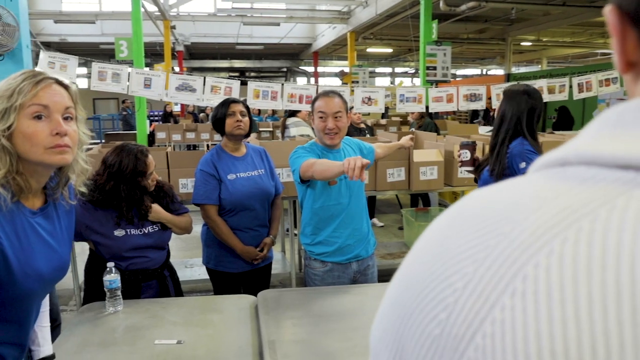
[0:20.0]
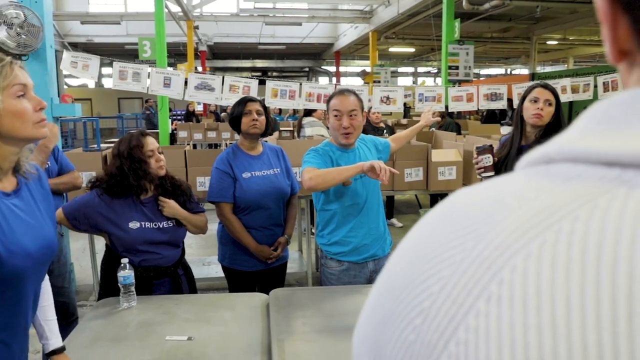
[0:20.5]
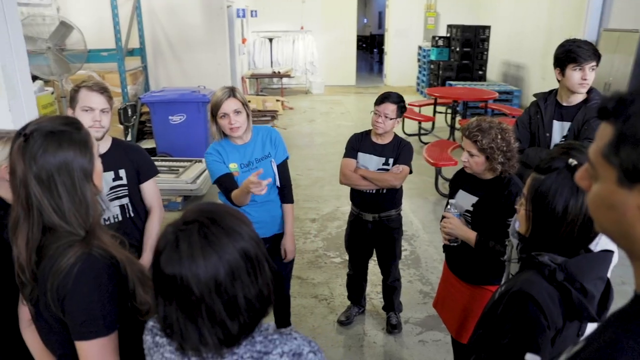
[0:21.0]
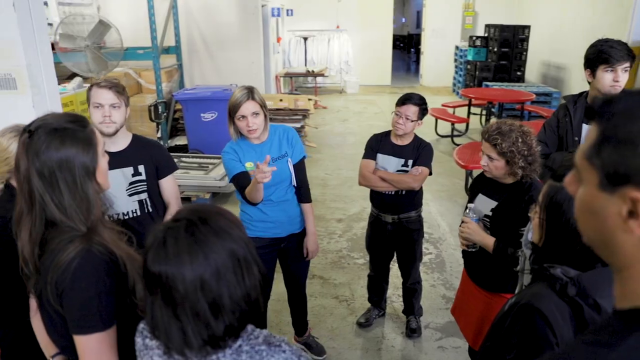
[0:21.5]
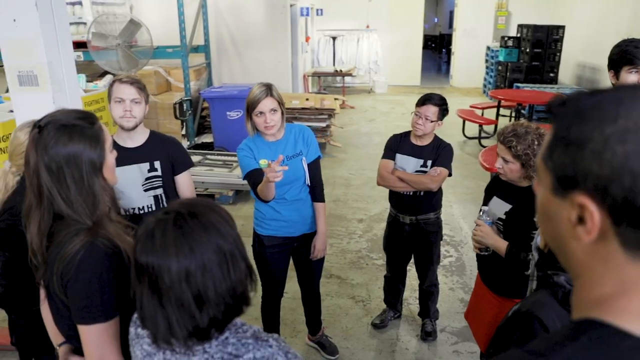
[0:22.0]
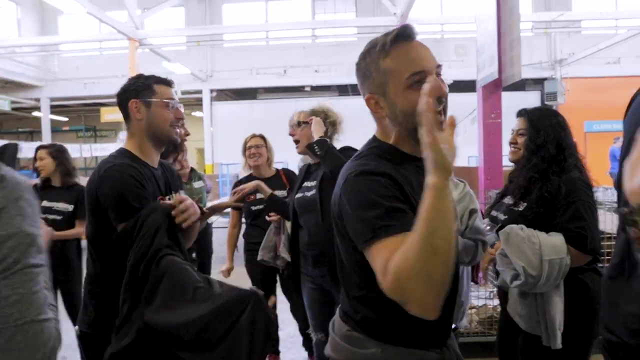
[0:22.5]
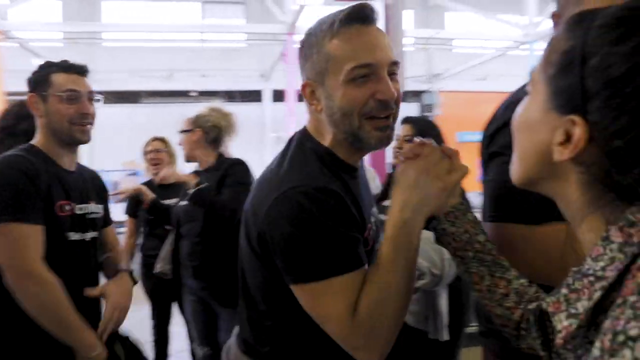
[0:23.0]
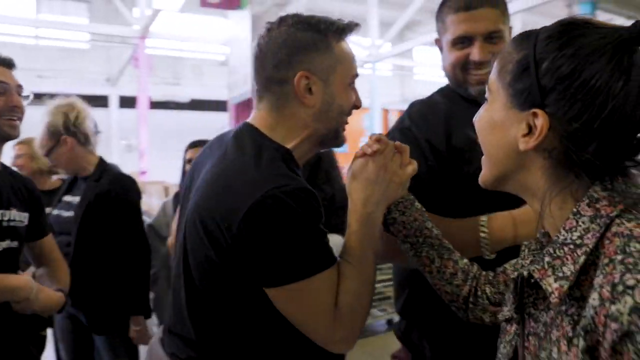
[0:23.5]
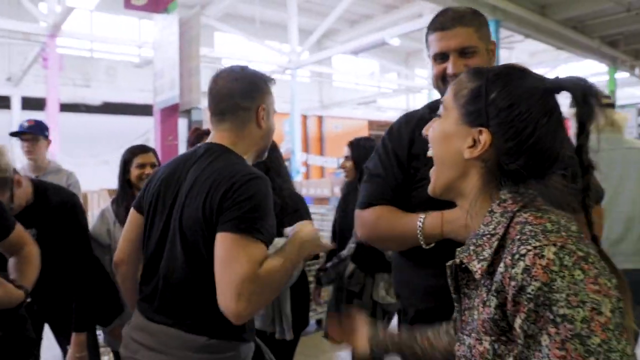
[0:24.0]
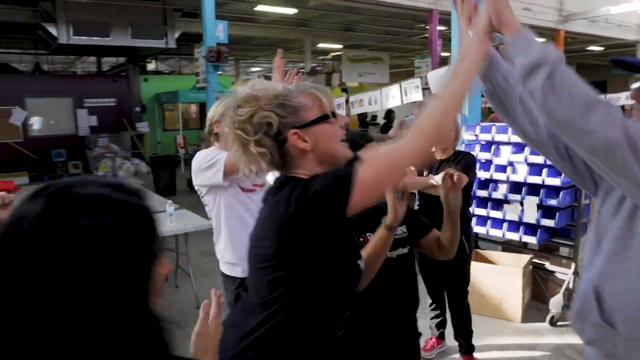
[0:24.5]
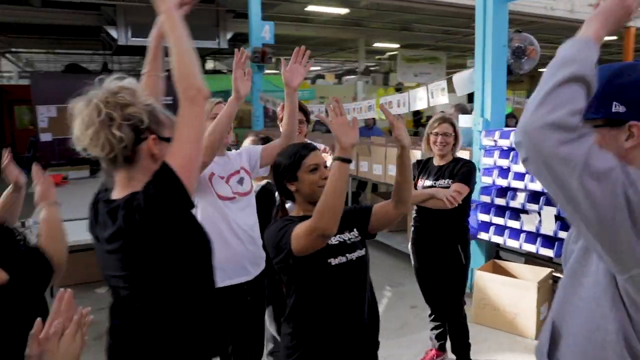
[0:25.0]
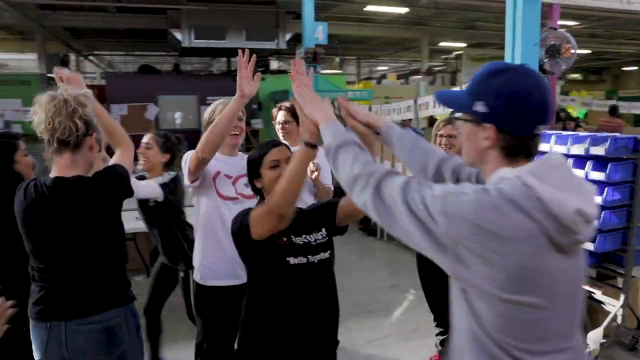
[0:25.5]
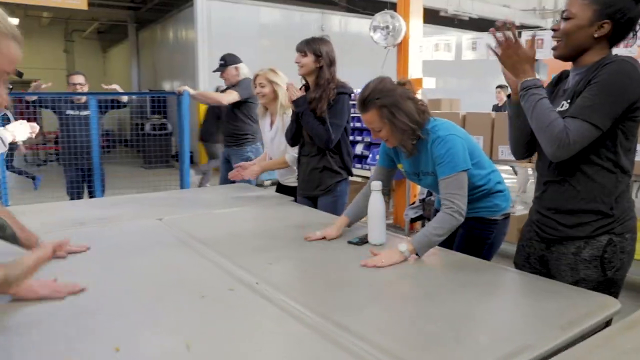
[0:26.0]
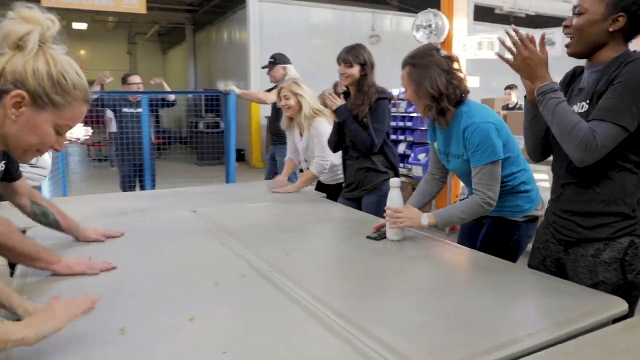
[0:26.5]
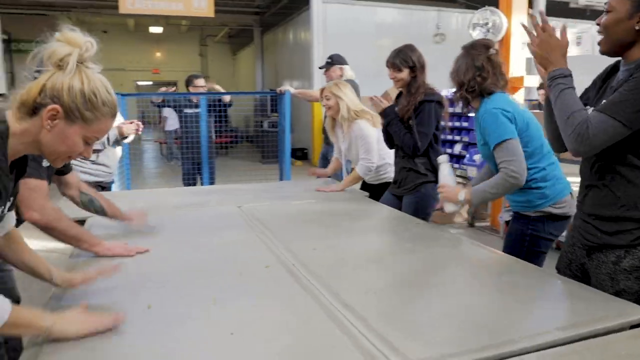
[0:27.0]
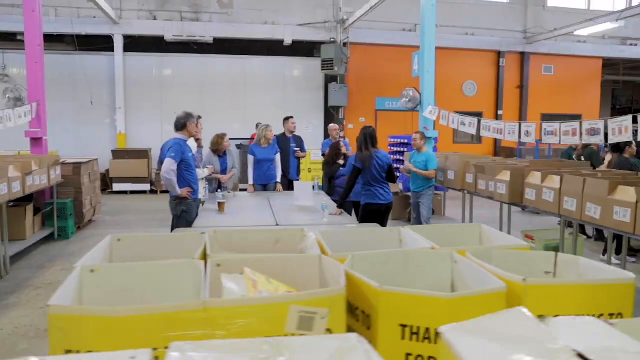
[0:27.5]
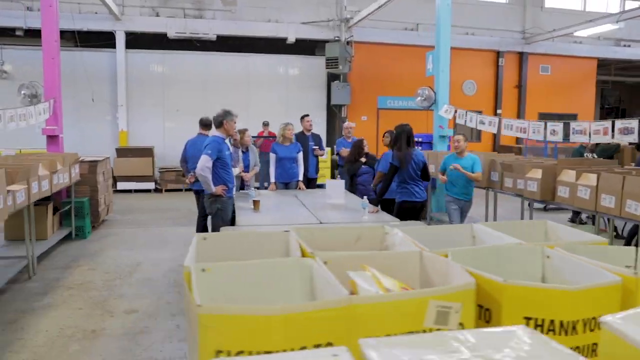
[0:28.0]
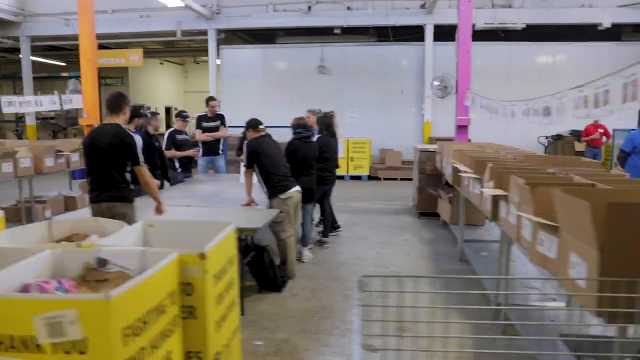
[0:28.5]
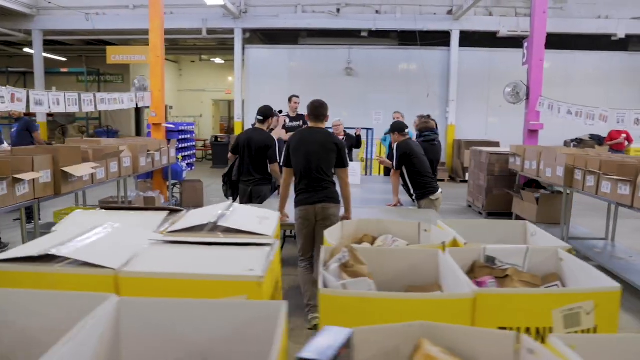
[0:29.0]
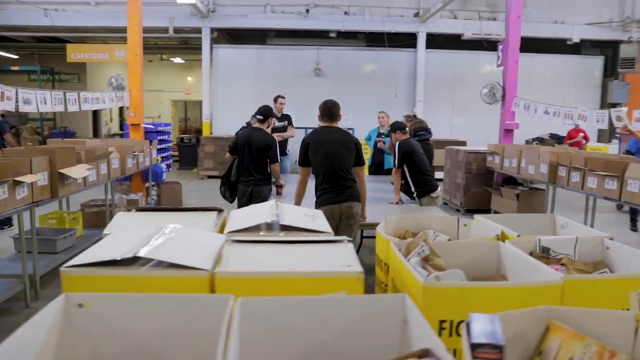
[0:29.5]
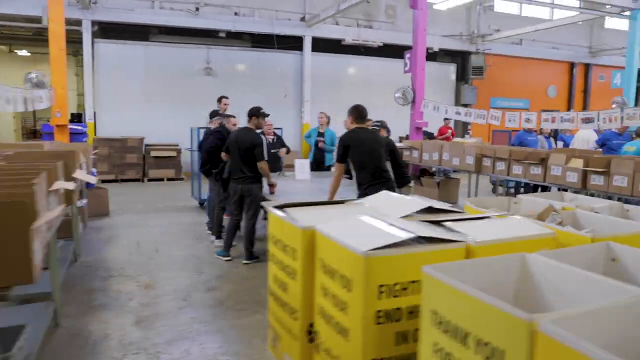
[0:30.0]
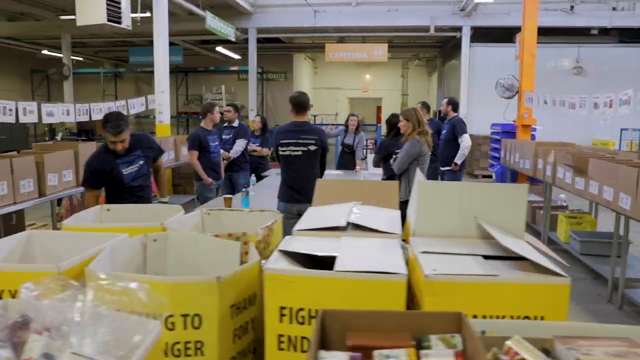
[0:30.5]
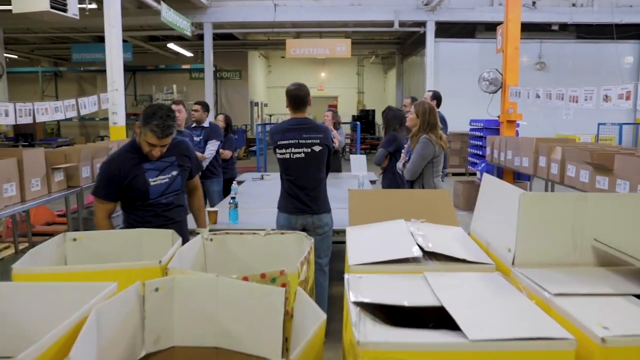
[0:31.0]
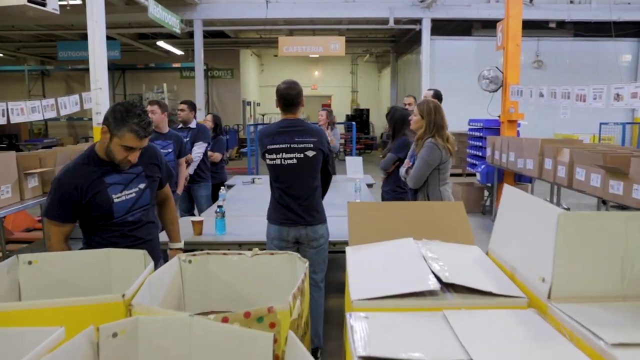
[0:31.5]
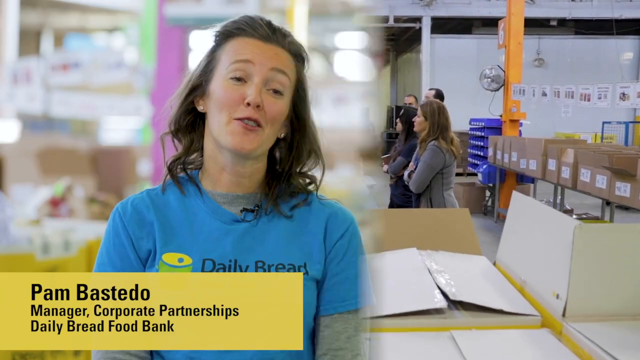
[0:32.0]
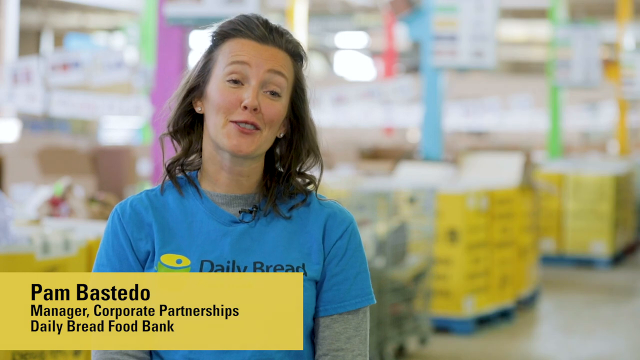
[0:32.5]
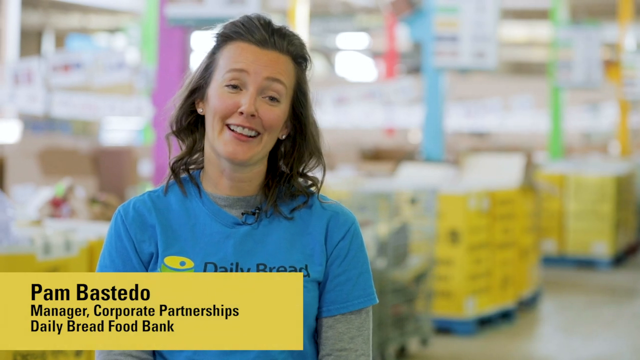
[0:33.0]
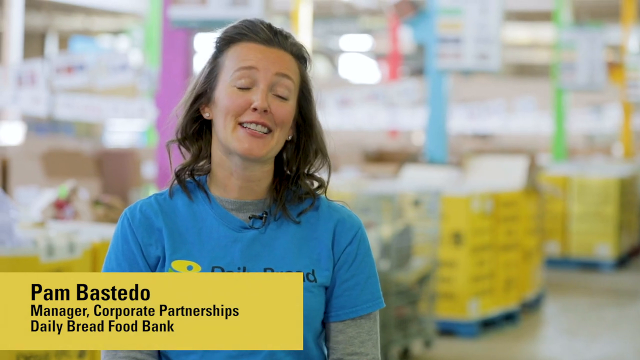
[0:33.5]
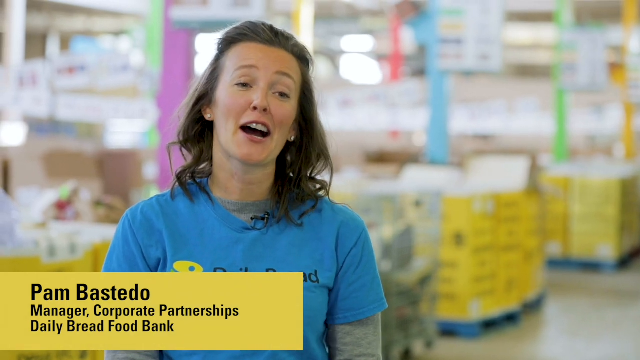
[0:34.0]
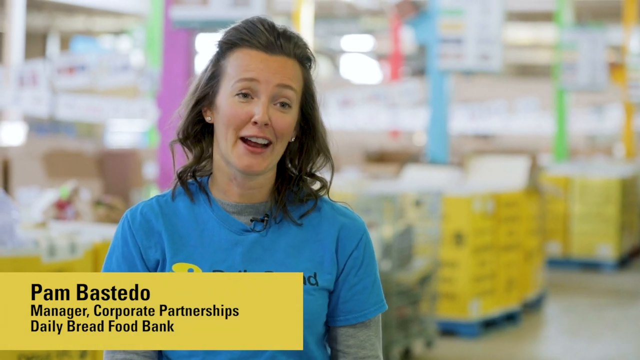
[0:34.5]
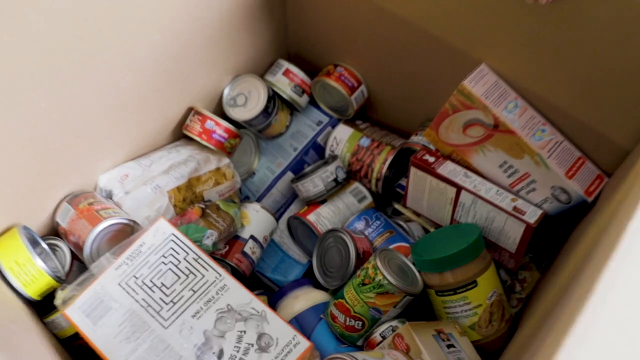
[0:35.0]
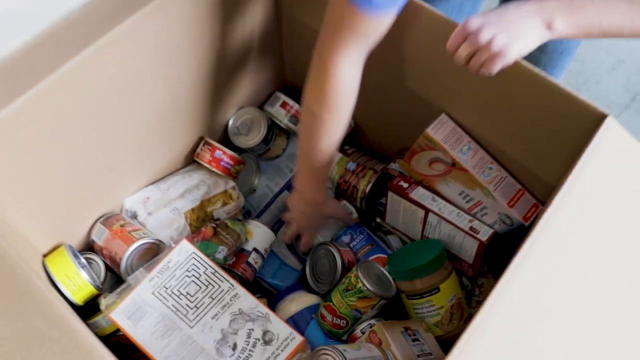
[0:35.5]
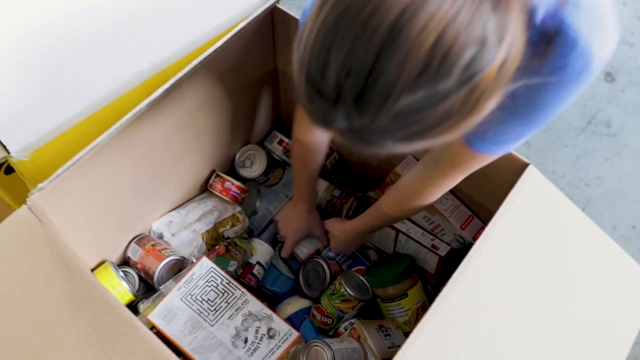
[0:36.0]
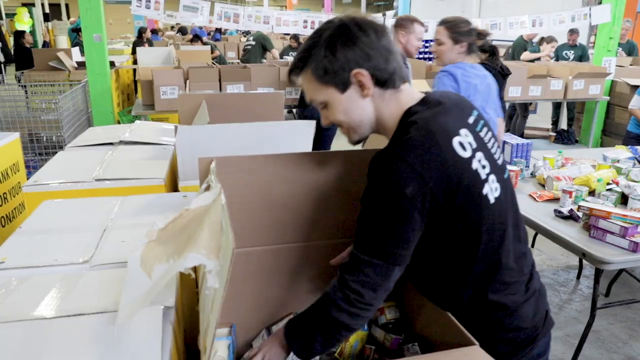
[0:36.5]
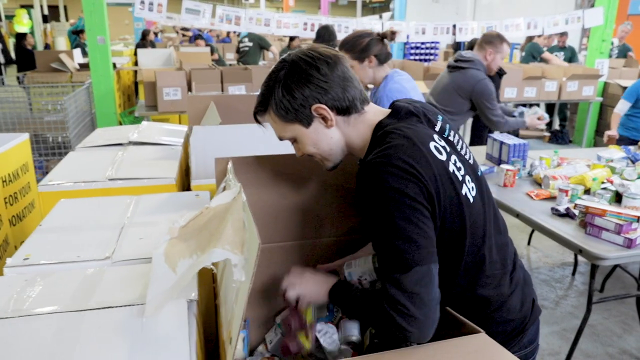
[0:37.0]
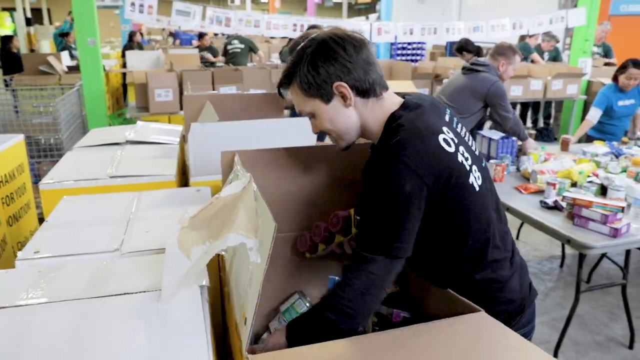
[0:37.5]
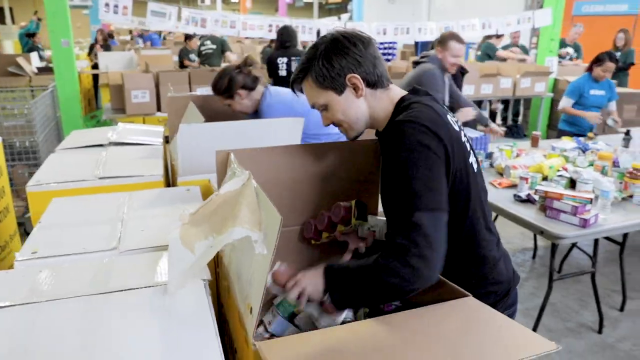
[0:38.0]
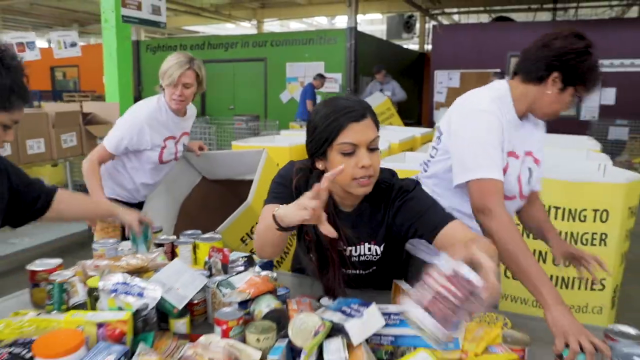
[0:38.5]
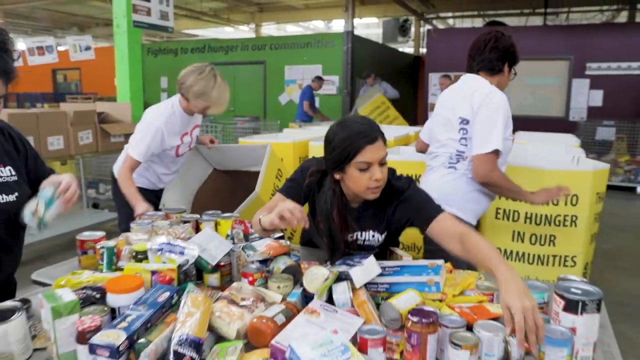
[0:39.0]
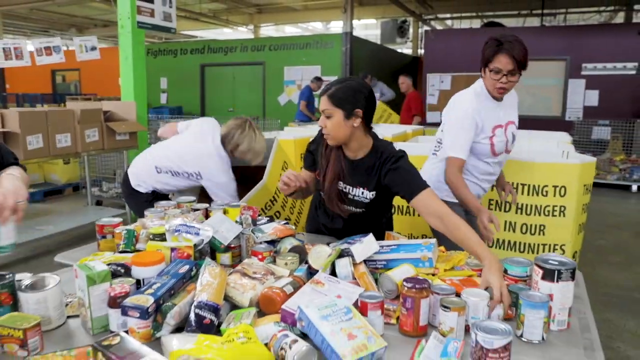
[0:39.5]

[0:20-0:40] Six people are on screen: one on the right side with their back to the camera, four on the left toward the center (three females and one male), and what appears to be another female in front of the person on the right, turned sideways to the camera. They all wear different shades of blue short-sleeved shirts. The one on the far left is a Caucasian female with blondish hair that looks dyed. Next is a brunette with her head turned sideways away from the camera. The third has dark brown or black jawline-length hair. To her right is a male who looks Asian; he points his fingers in two different directions and wears a light blue shirt with blue jeans. The view changes to even more people kind of gathered in a circle, with a blonde female talking and pointing; she wears a blue short-sleeved shirt over a long-sleeved black undershirt and has bleached or colored blonde hair. The scene then changes to a room full of many people who appear to be visiting or collaborating, talking and laughing.